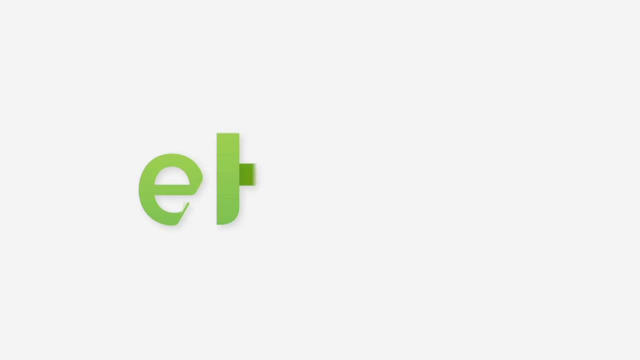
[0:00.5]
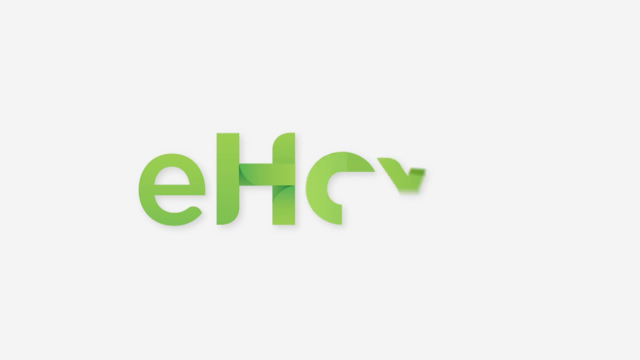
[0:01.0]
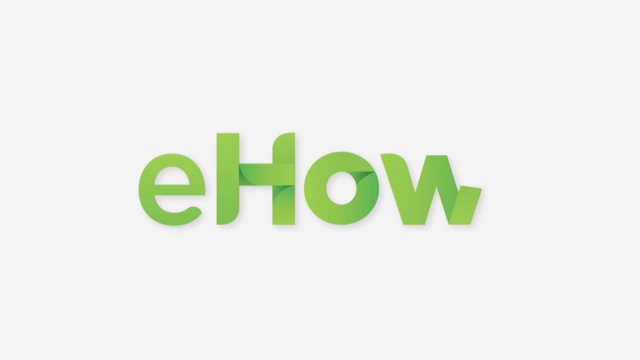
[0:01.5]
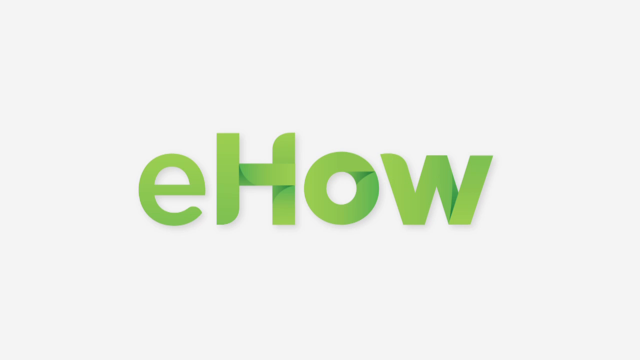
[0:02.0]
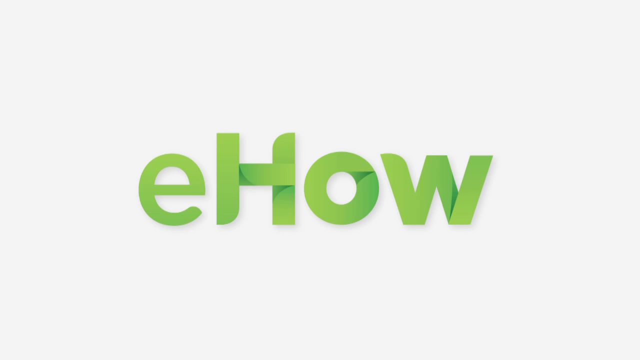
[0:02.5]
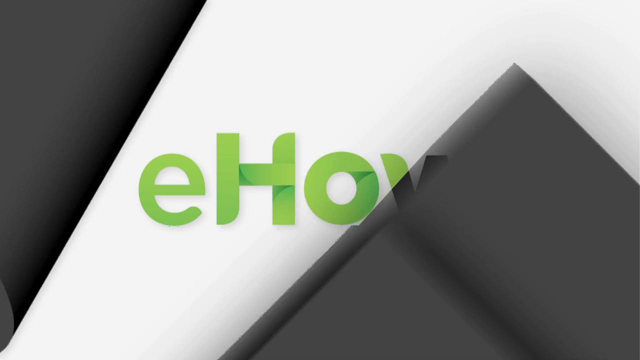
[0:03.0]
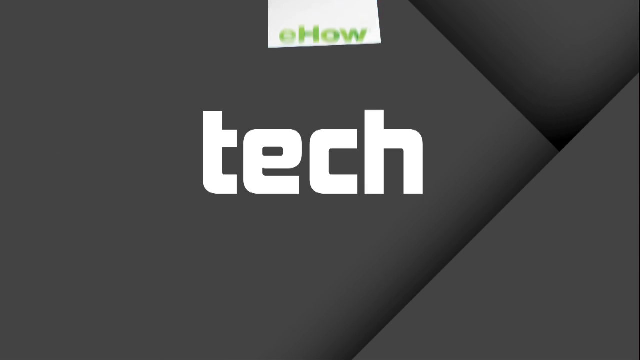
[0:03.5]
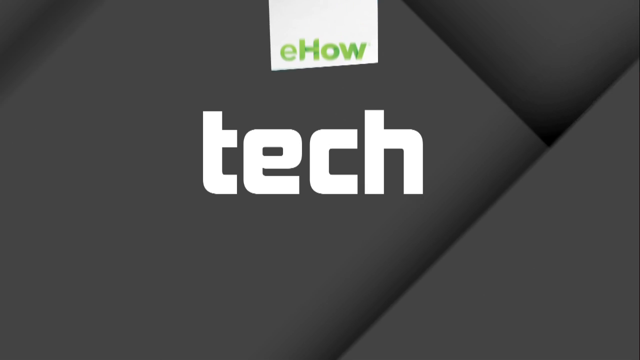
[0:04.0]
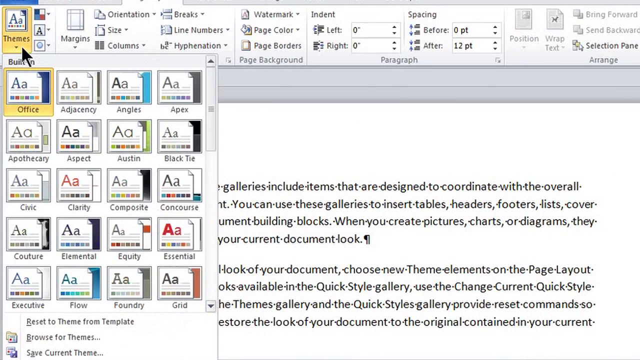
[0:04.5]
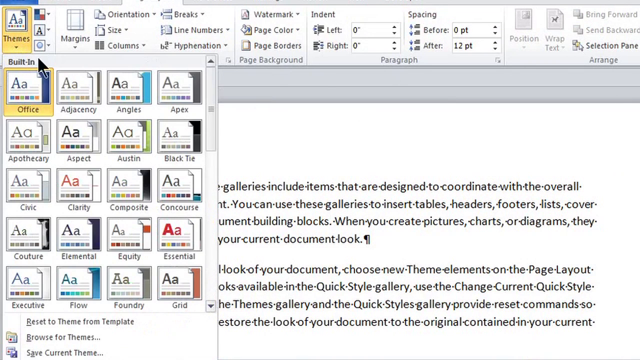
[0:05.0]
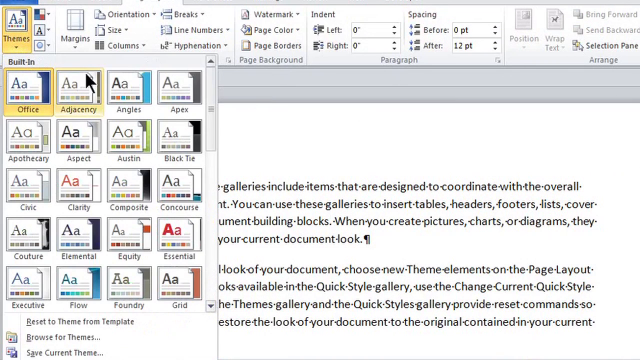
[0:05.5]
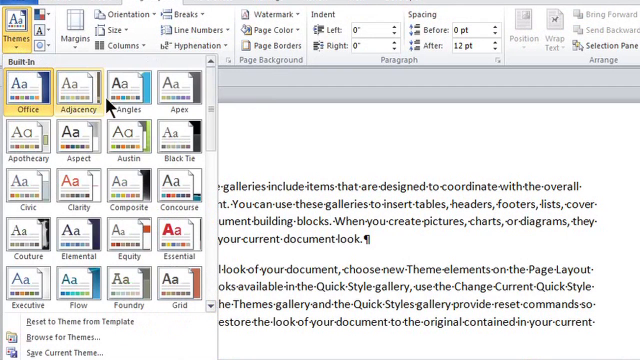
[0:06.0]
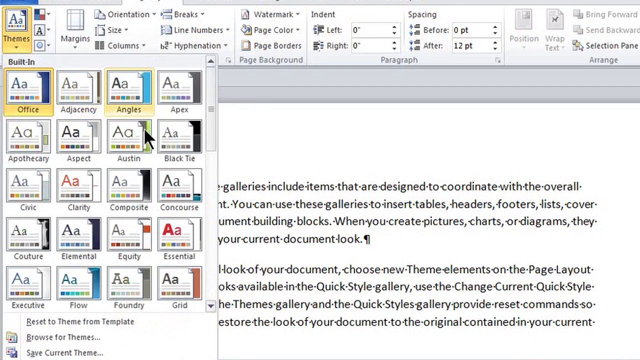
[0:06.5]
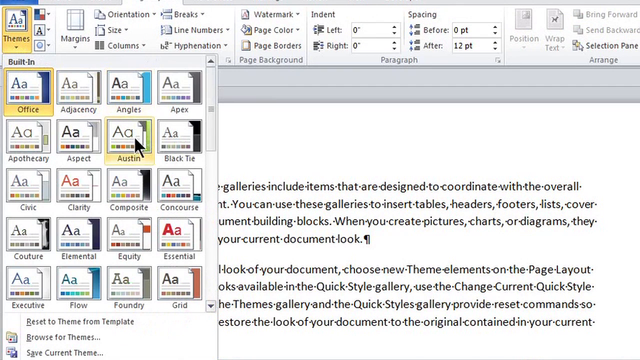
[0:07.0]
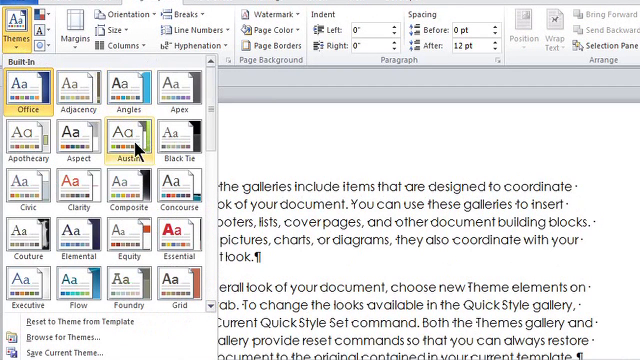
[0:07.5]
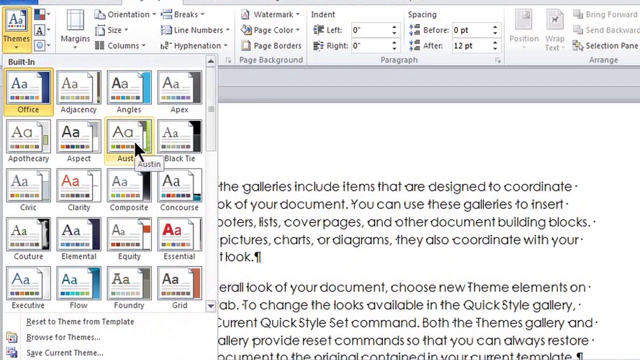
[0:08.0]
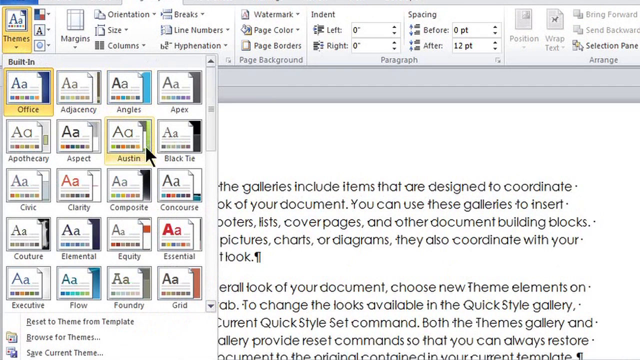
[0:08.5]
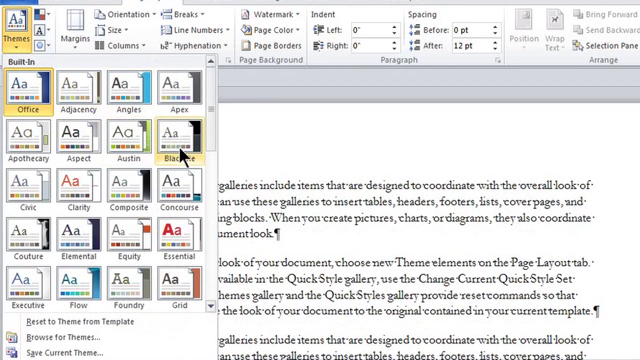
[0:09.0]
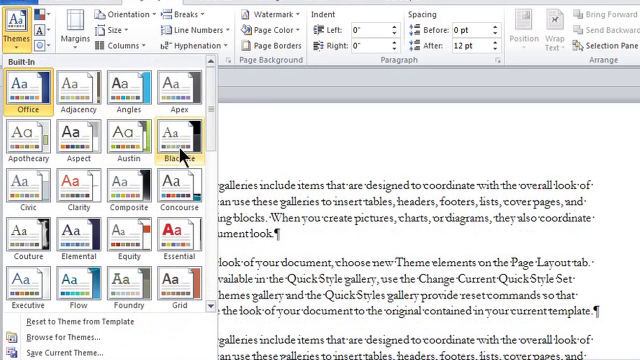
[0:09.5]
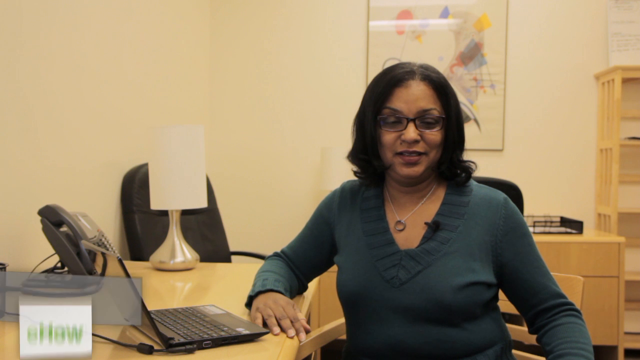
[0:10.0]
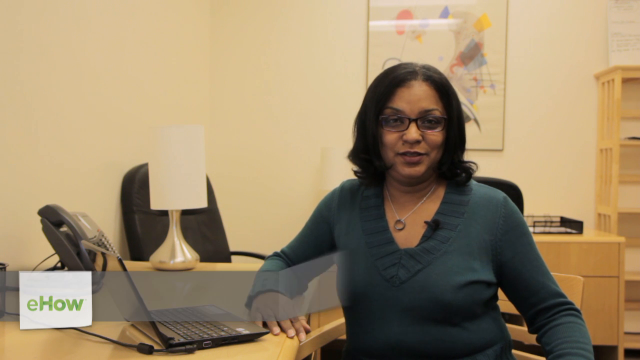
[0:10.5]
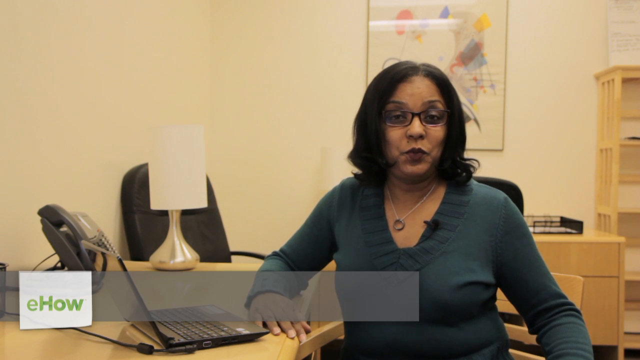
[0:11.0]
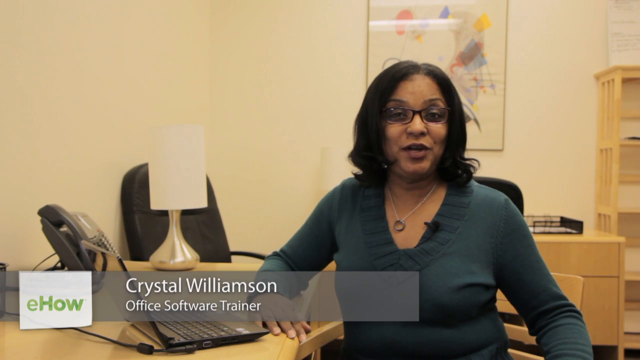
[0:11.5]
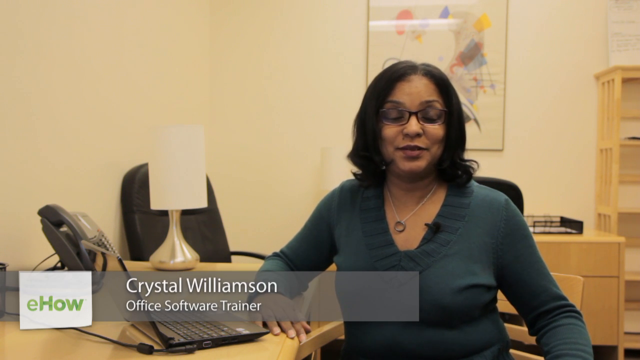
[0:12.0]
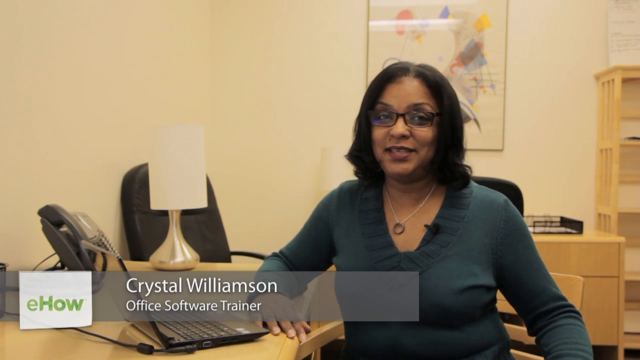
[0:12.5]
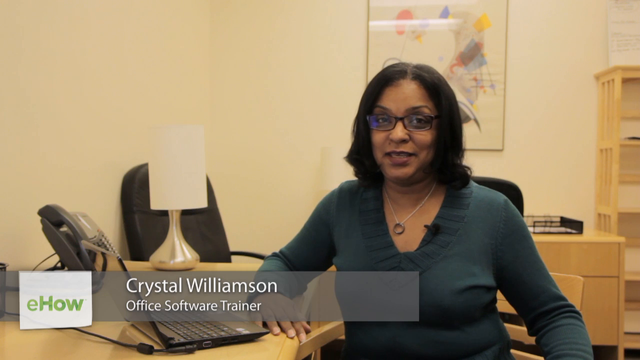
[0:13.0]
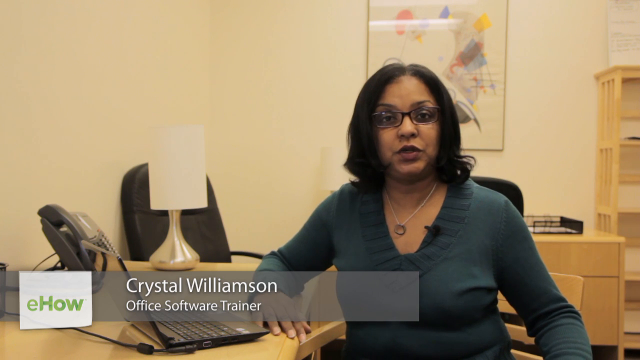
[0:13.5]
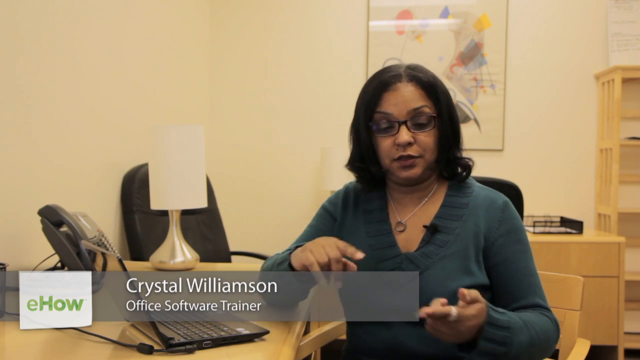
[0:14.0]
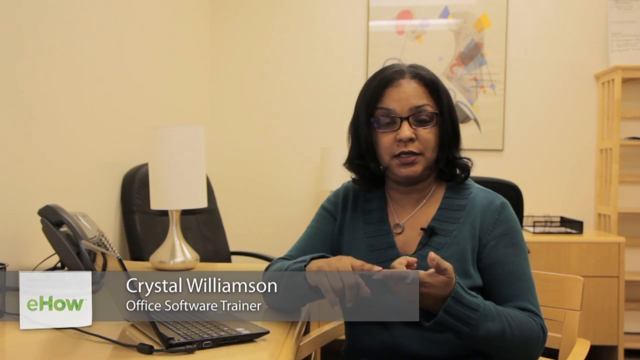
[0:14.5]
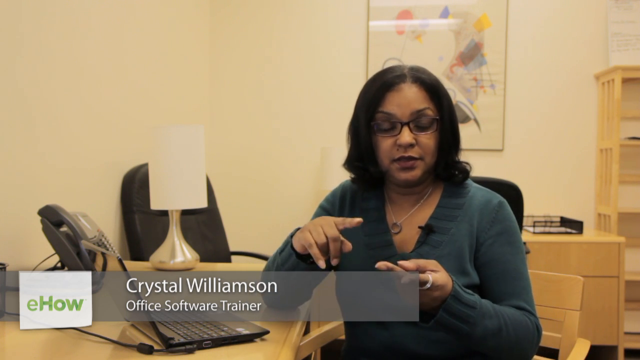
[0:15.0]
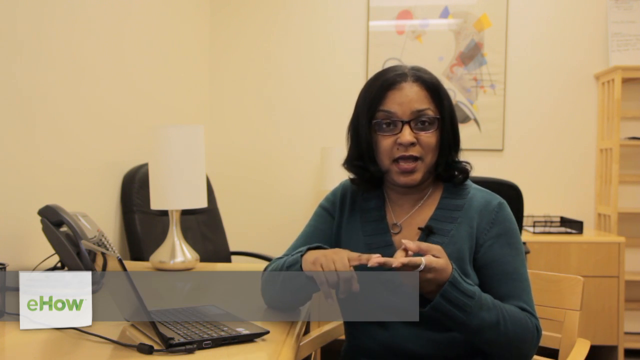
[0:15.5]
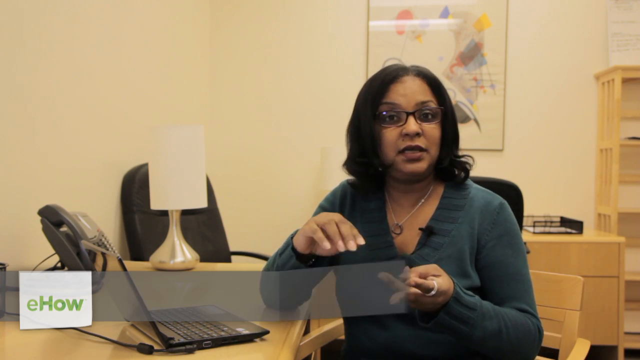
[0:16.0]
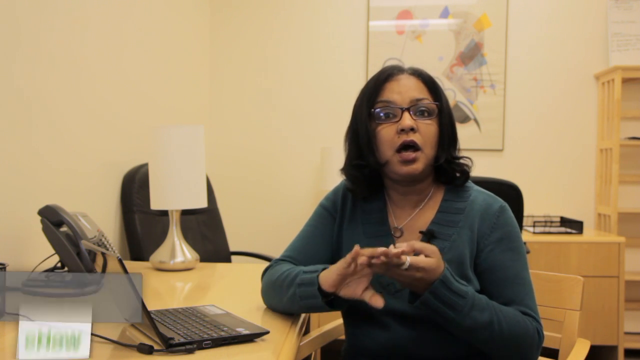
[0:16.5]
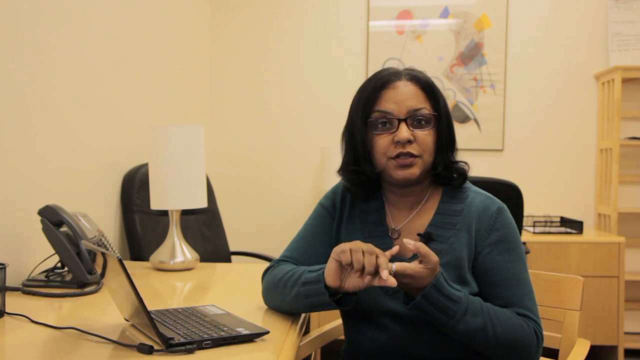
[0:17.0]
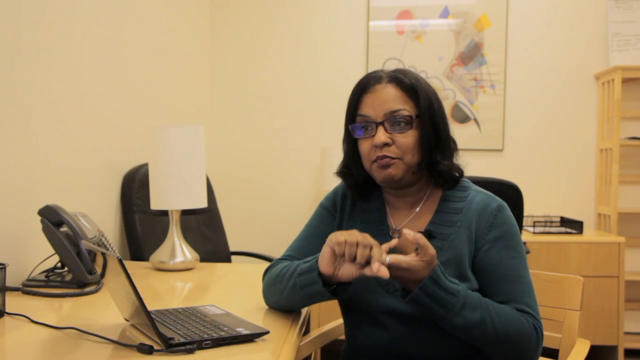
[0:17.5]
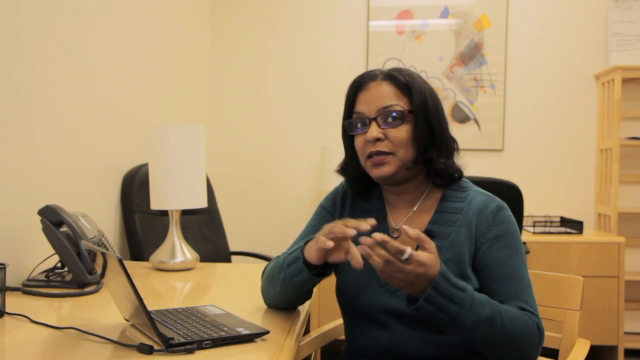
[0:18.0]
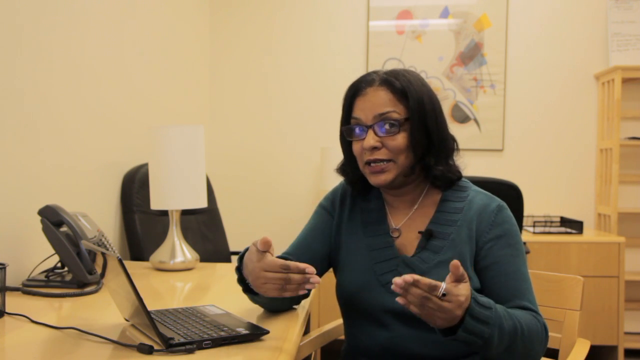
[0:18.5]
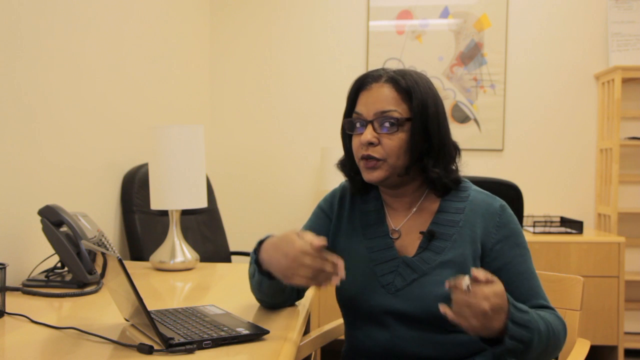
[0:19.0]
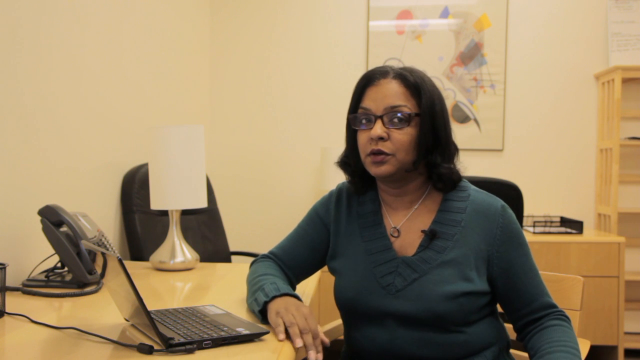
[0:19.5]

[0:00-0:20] eHow Tech is shown, followed by a screen showing a click on Austin. A woman named Crystal Williamson, an office software trainer, sits in an office with cupboards and shelves. It seems to be a shared office, since there are other chairs and other desks on the other side. She is talking and explaining something.